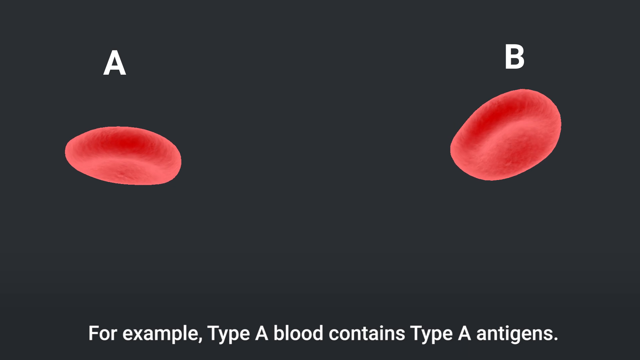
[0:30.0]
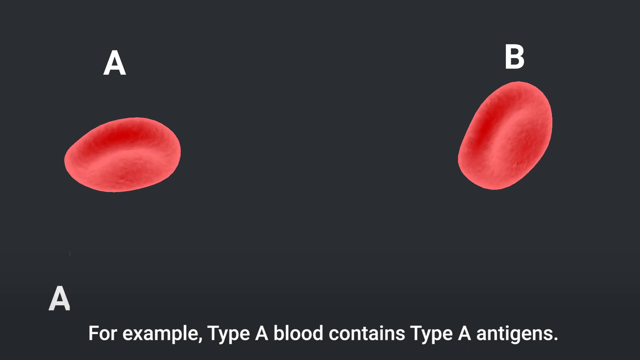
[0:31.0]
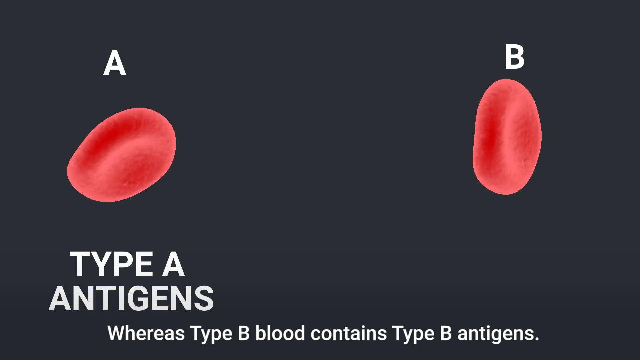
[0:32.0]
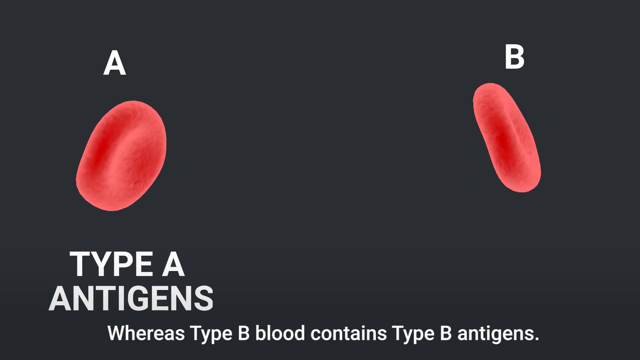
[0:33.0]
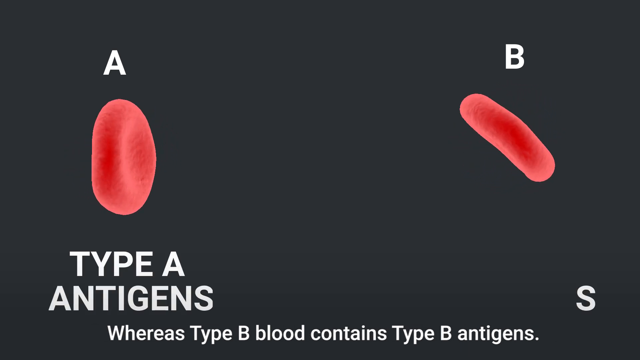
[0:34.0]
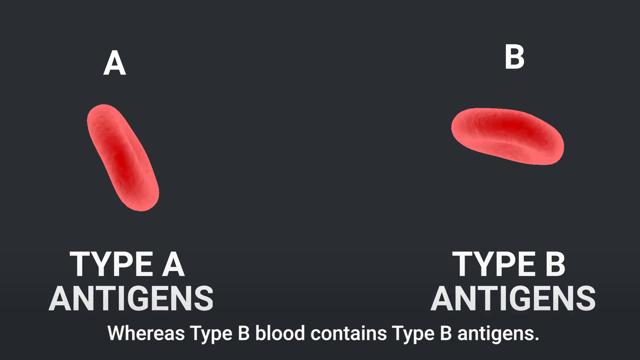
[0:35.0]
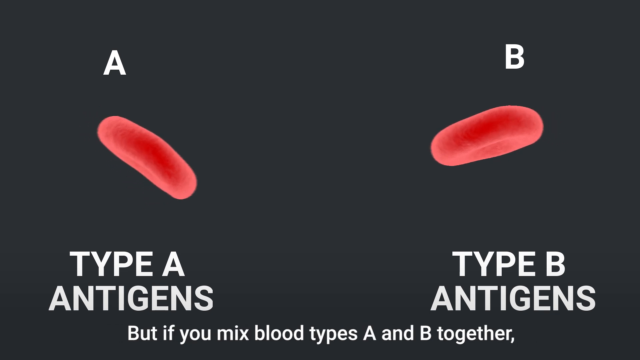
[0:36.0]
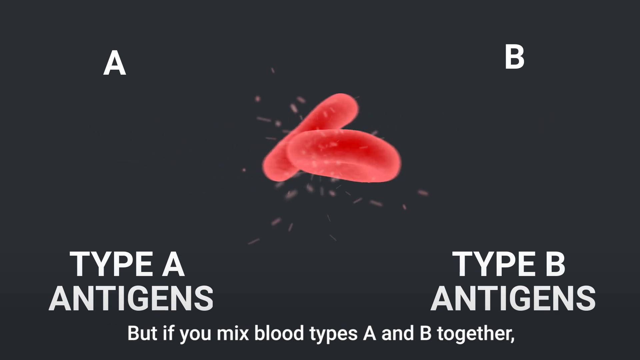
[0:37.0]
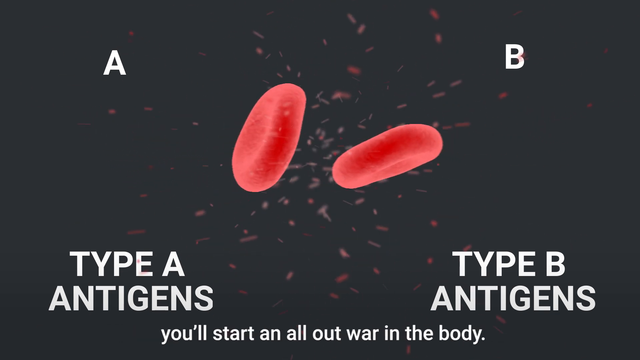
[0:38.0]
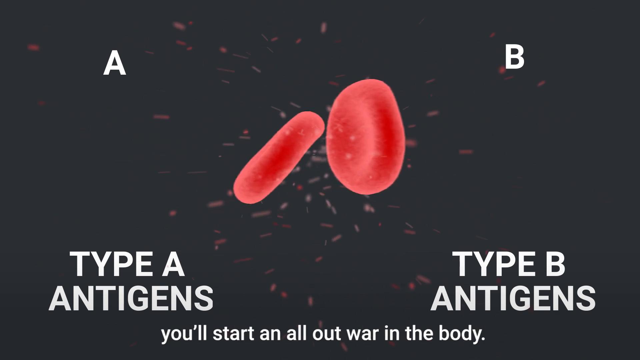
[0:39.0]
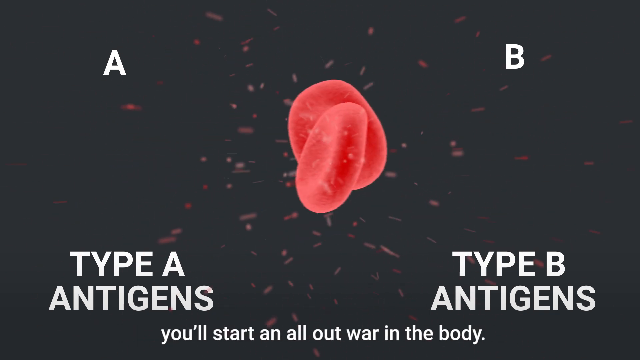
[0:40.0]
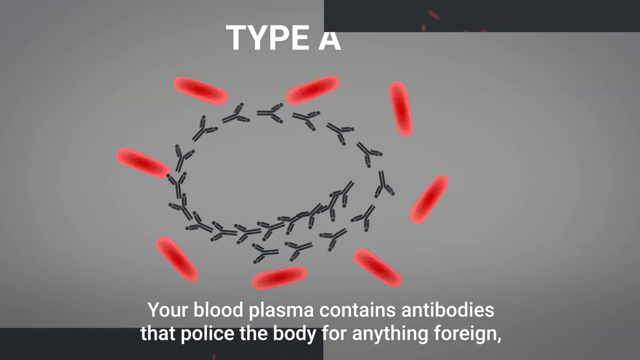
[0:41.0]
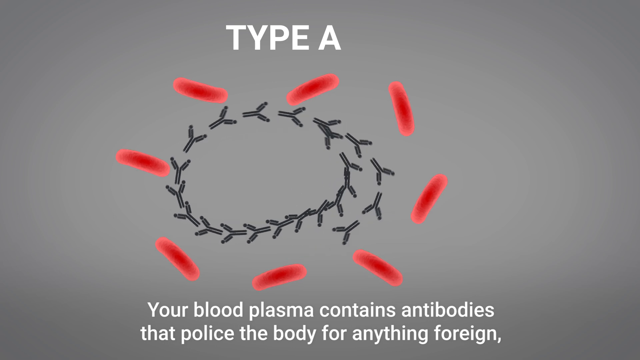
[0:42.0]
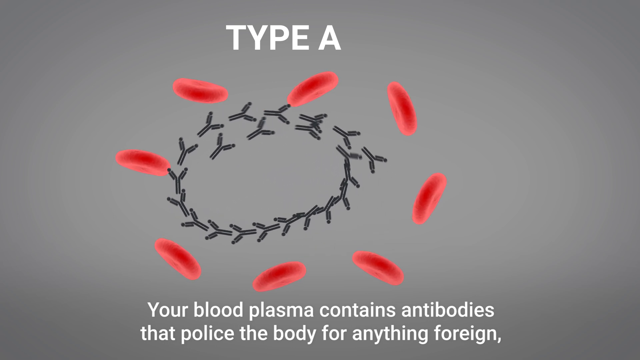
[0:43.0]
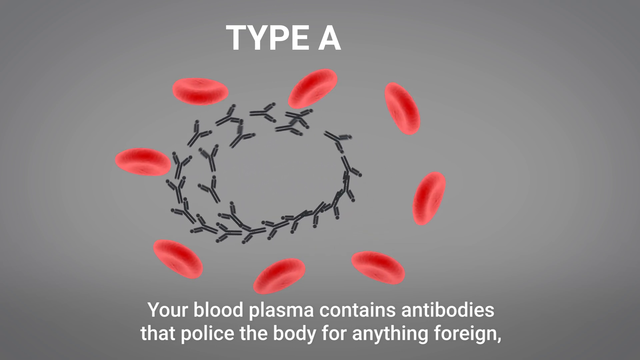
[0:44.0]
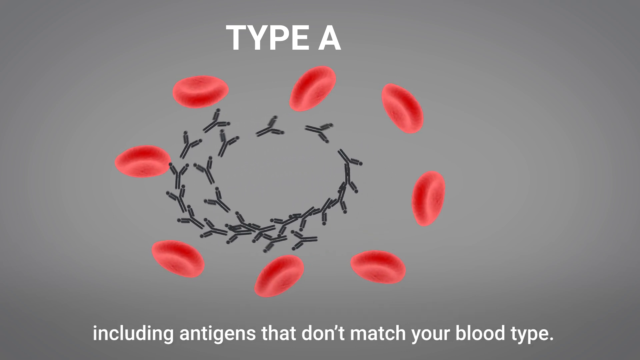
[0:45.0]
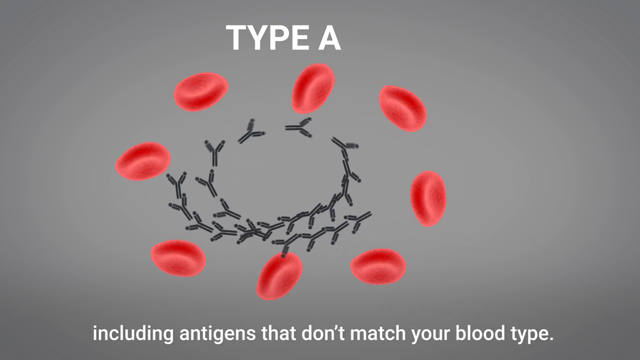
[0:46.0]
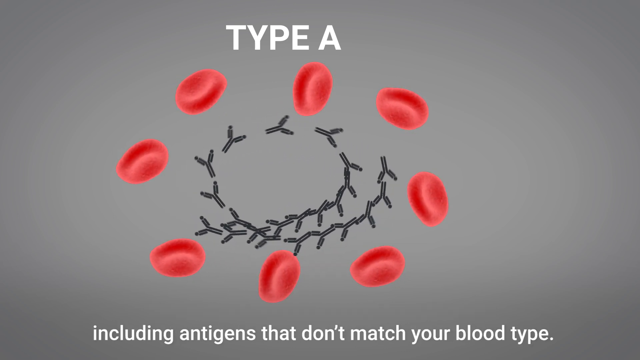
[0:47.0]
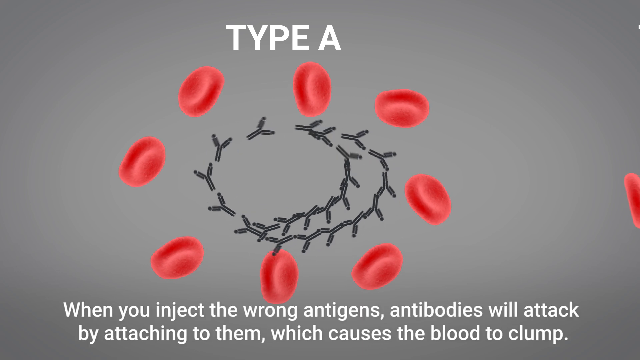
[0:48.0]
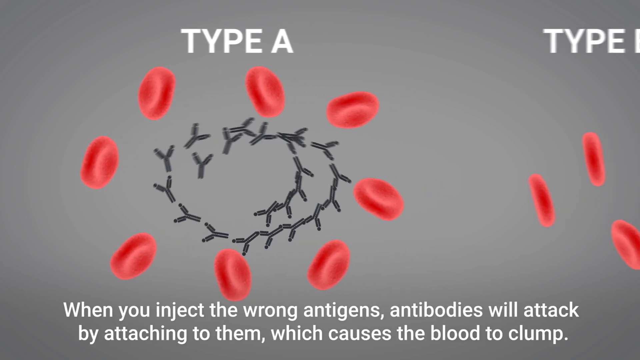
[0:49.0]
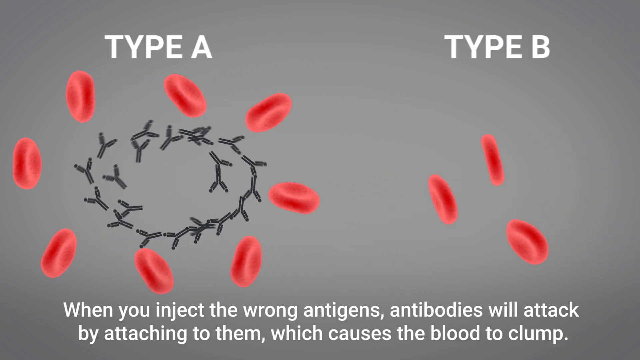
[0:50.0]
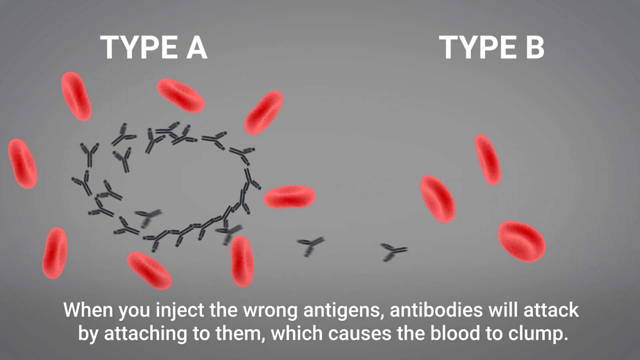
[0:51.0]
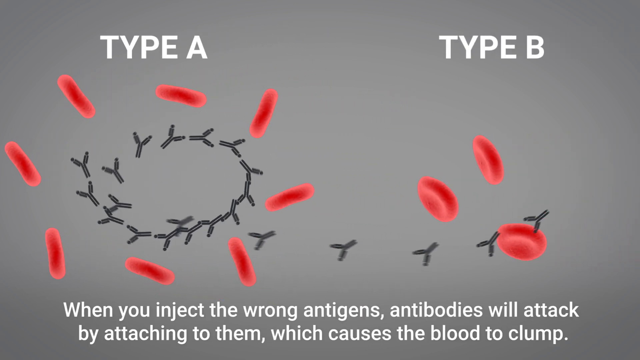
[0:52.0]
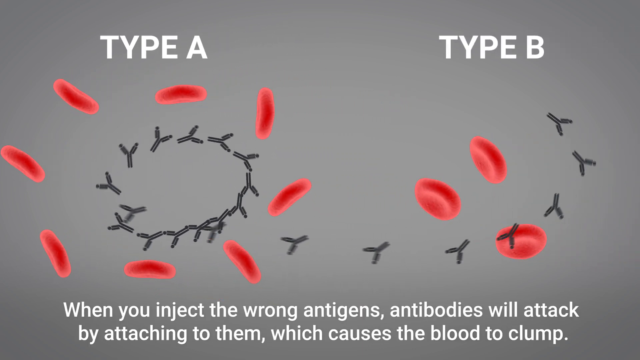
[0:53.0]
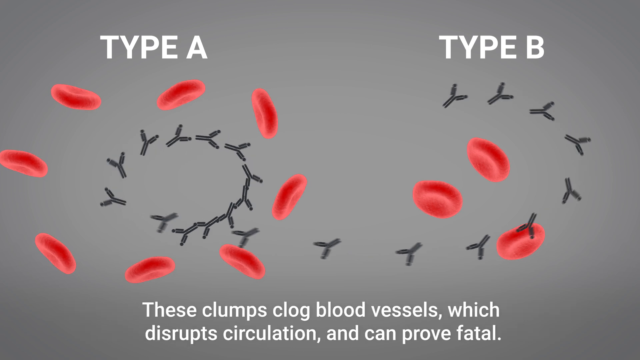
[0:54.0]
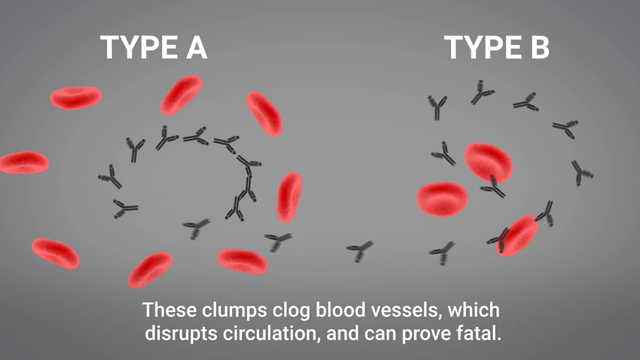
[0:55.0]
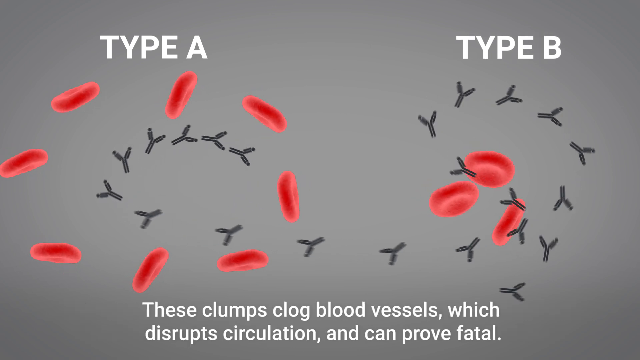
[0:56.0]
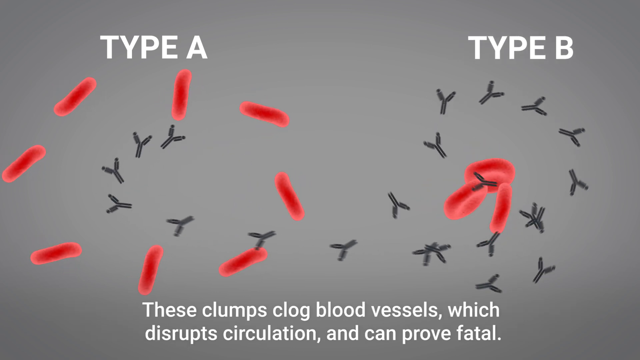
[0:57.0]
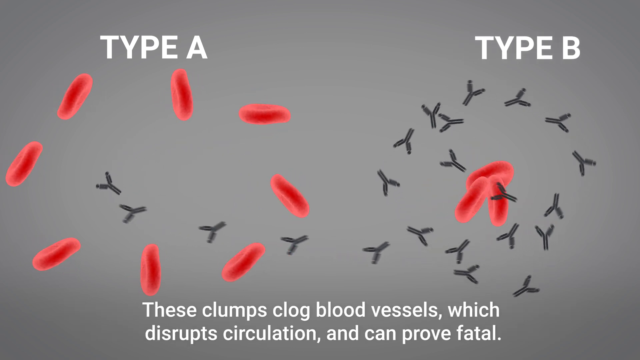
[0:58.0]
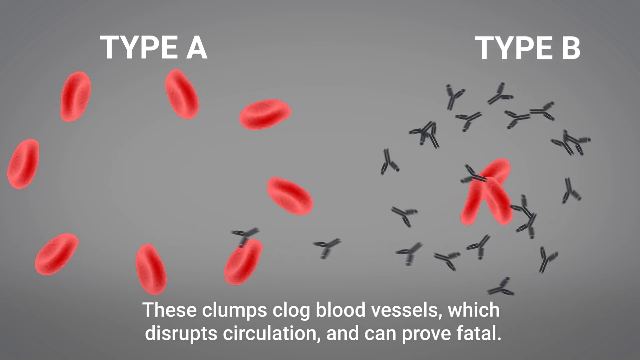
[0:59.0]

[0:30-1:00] Two more blood vessels appear, one on the left labeled A and one on the right labeled B. A label right below the left one identifies it as a type A antigen, and the one on the right is a type B antigen. The subtitles say "for example, type A blood contains type A antigens, whereas type B blood contains type B antigens," followed by "But if you mix blood types A and B together, it'll start an all-out war in the body. Your blood plasma contains antibodies that police the body for anything foreign." A bunch of type A blood vessels are then shown rotating around each other, along with sort of almost chicken-feet-looking patterns that kind of circle around counterclockwise.